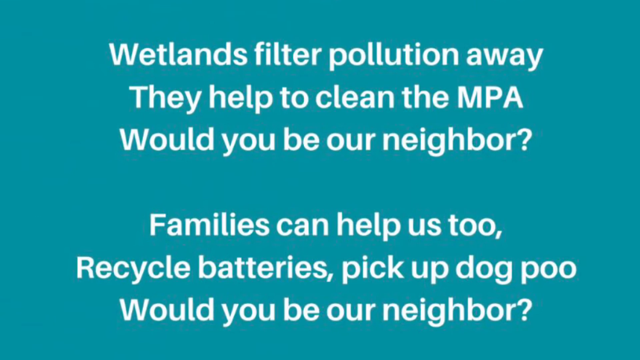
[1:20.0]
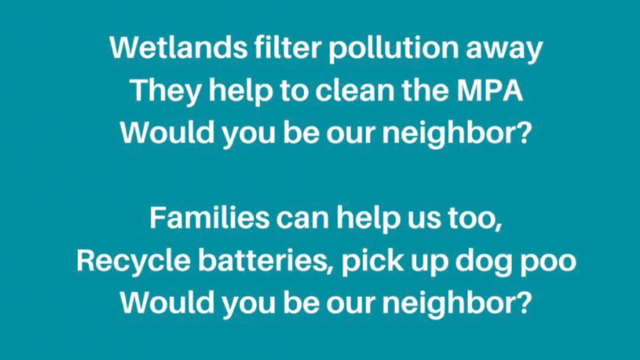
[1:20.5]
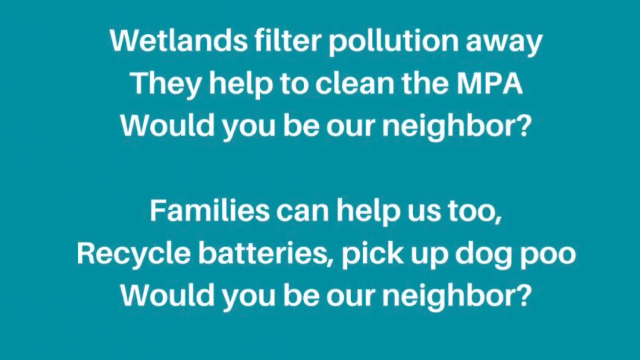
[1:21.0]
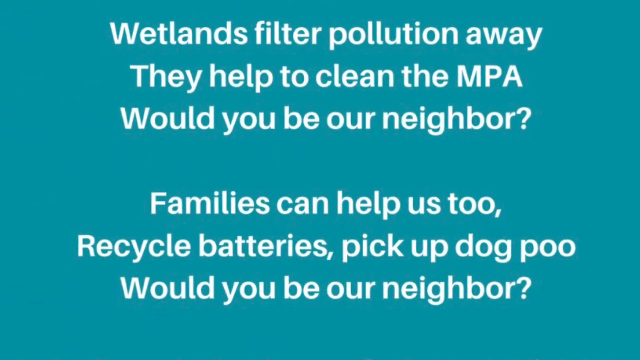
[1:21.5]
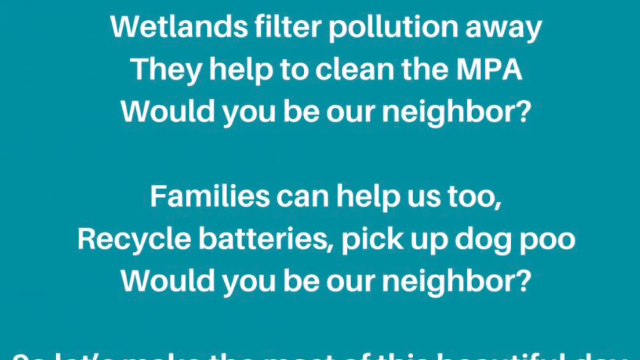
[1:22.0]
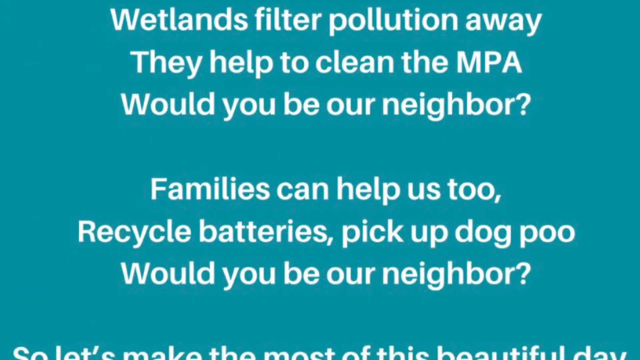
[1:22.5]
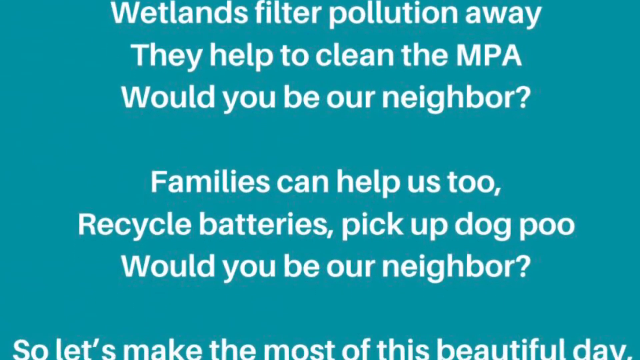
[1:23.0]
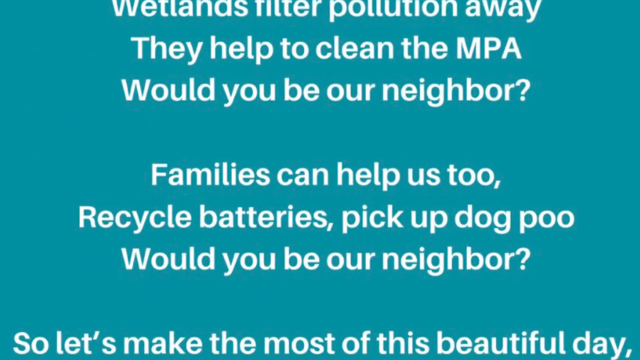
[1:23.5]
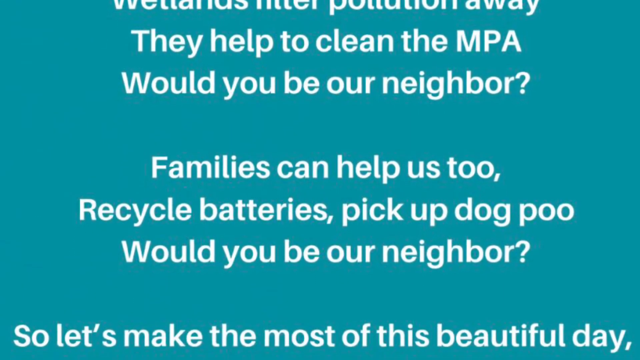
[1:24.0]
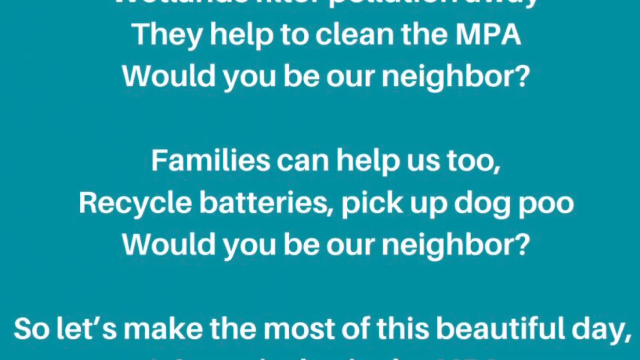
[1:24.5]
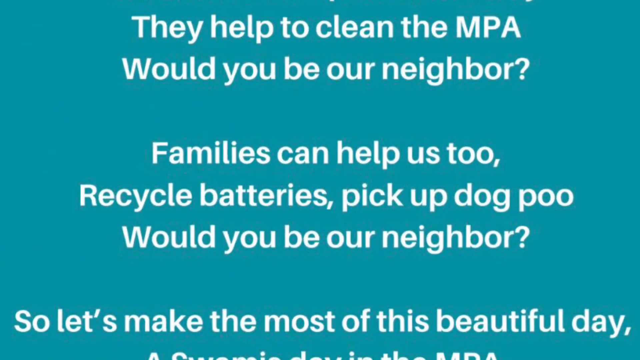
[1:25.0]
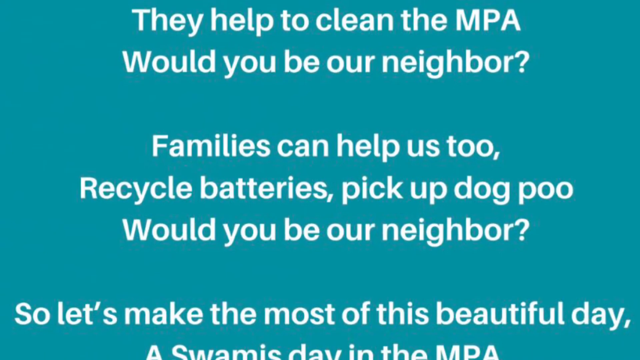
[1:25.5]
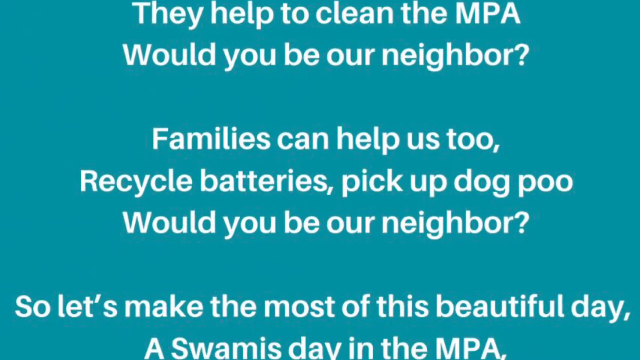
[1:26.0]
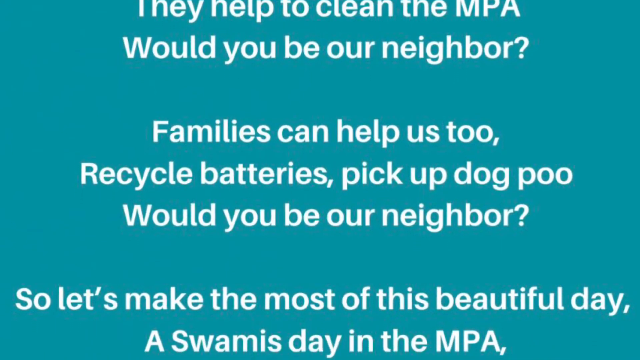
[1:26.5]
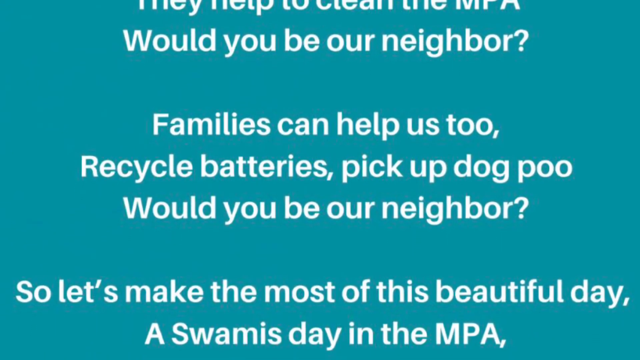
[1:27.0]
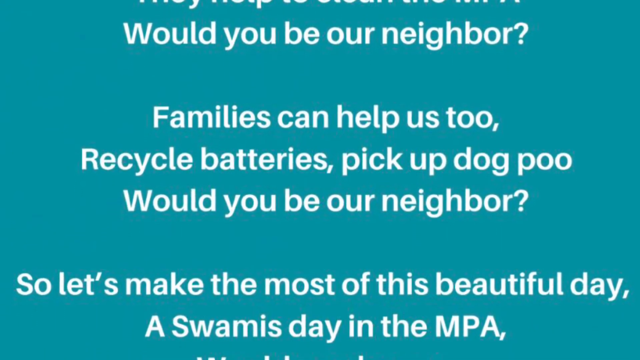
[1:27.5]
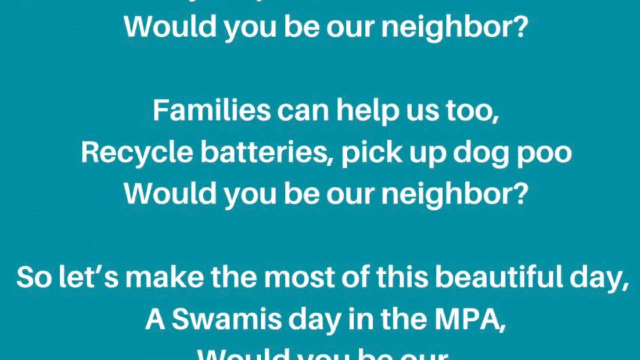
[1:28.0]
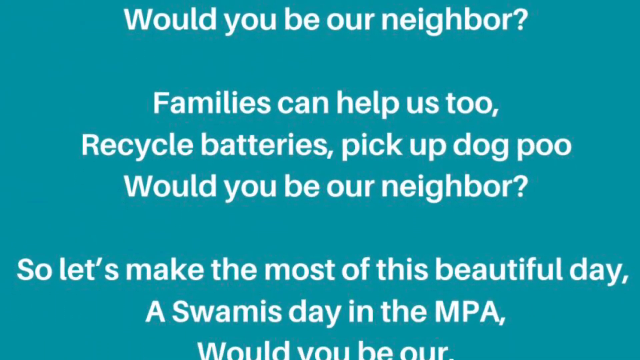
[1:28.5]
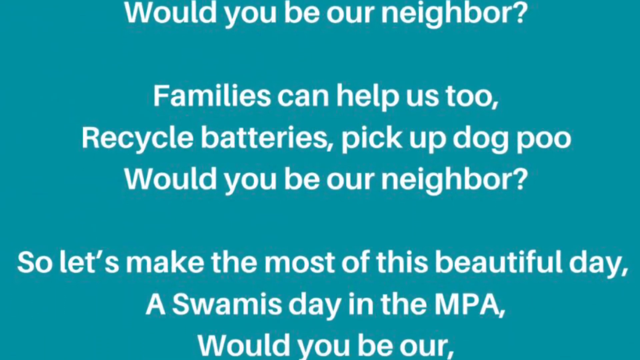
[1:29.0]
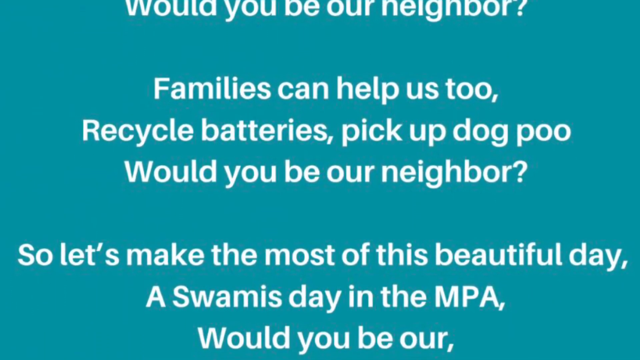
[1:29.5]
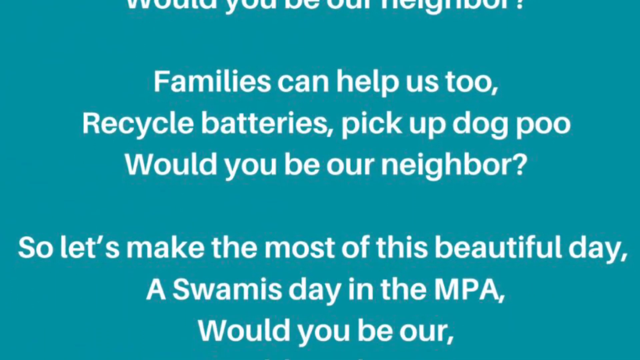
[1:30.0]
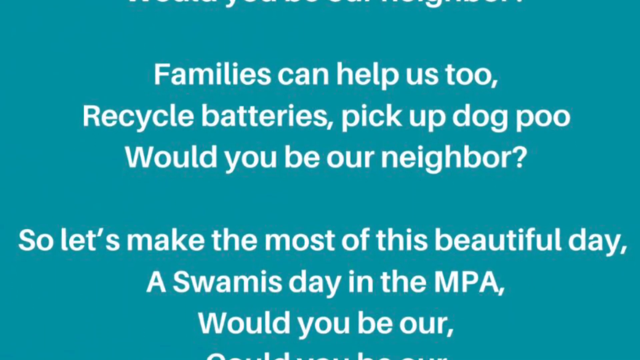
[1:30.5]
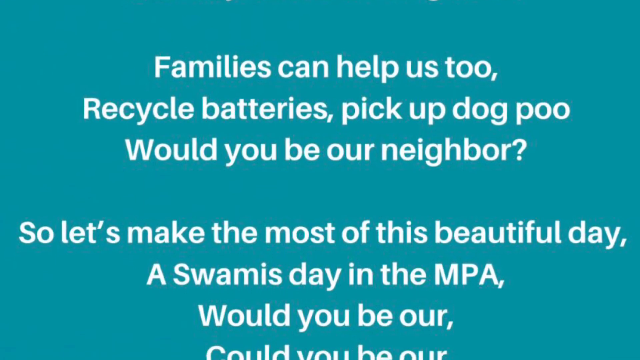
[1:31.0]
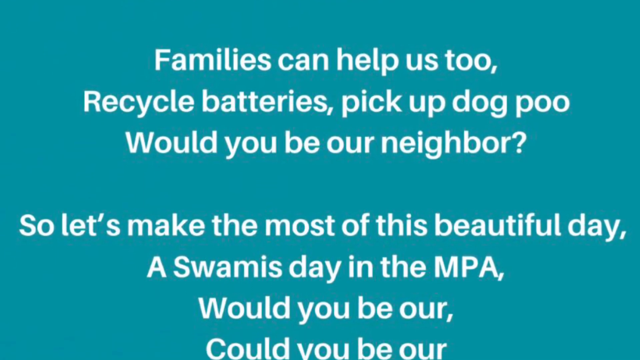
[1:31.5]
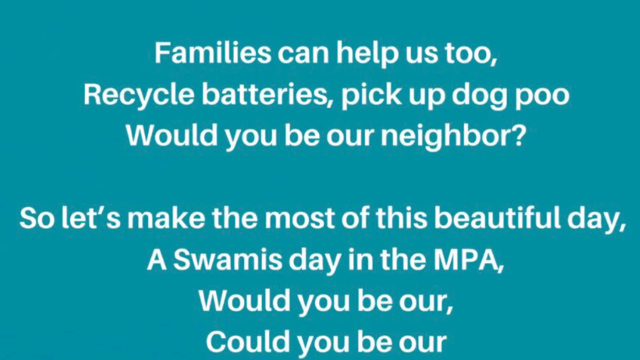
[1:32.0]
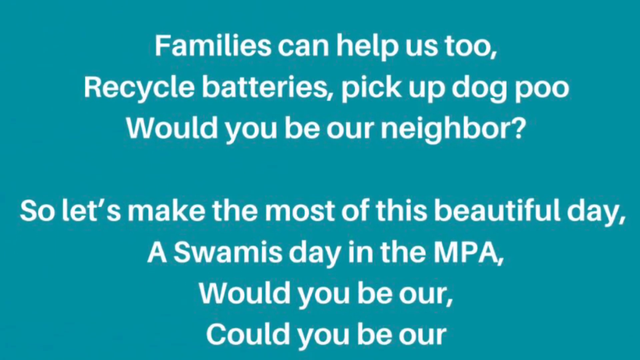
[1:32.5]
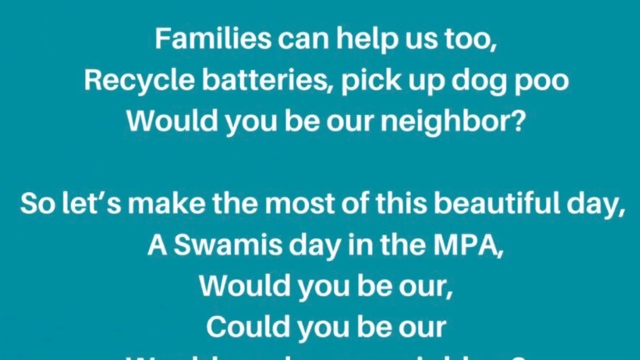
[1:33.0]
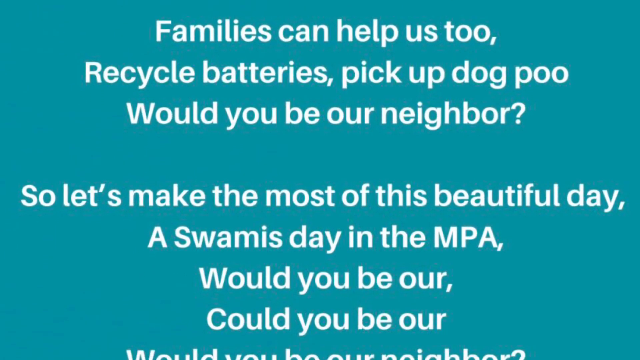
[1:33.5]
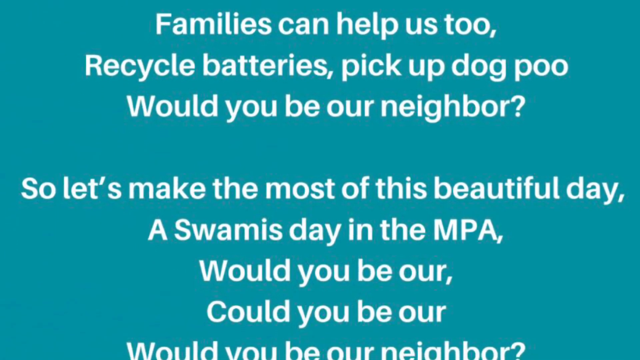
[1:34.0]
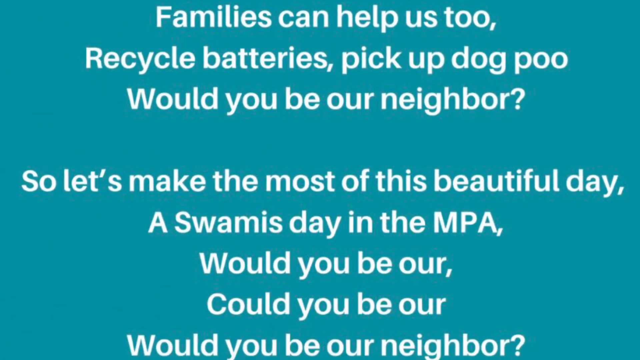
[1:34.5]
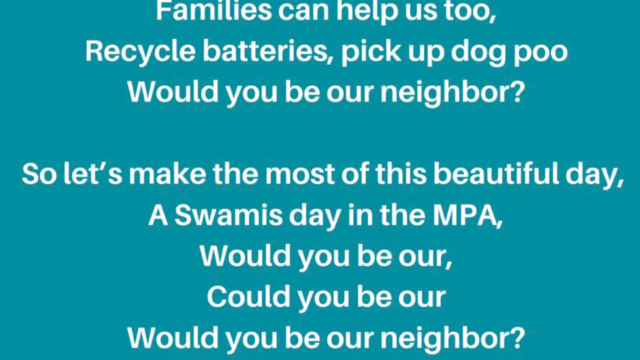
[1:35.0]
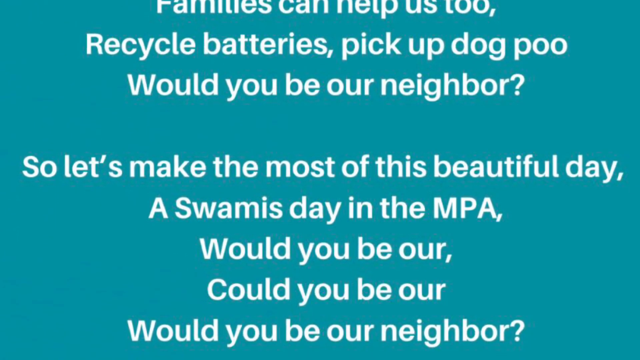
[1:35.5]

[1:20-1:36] Big, bold white words that are easy to read are on the screen: "Wetlands filter pollution away, they help us clean the MPA, will you be our neighbor? Families can help us too. Recycle batteries? Pick up dog poo? Would you be our neighbor?" The white words slowly move upward, revealing more words underneath, which read "Let's make the most of this beautiful day" and "would you be our neighbor could you be would you be our neighbor". The text seems to encourage everyone to do their part in keeping the environment safe by recycling batteries, picking up dog poo and using wetlands to clean the environment.